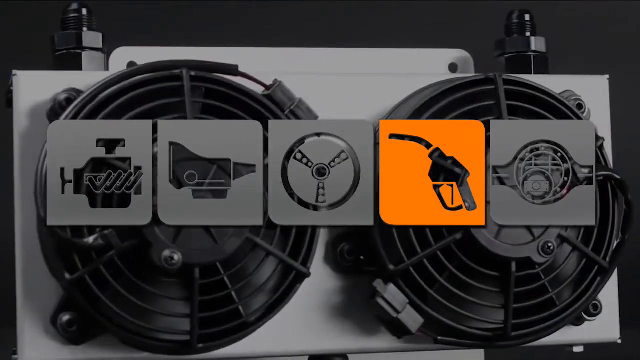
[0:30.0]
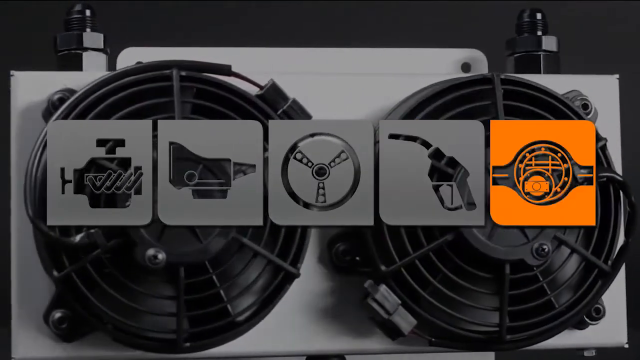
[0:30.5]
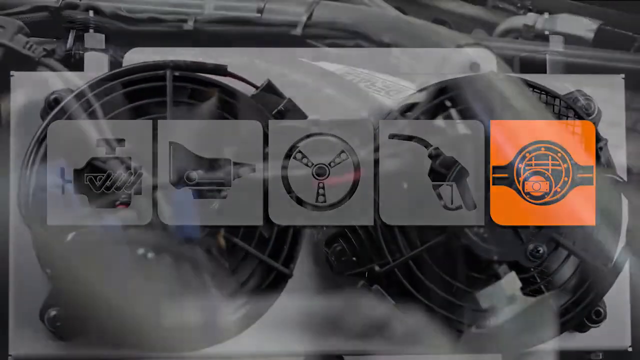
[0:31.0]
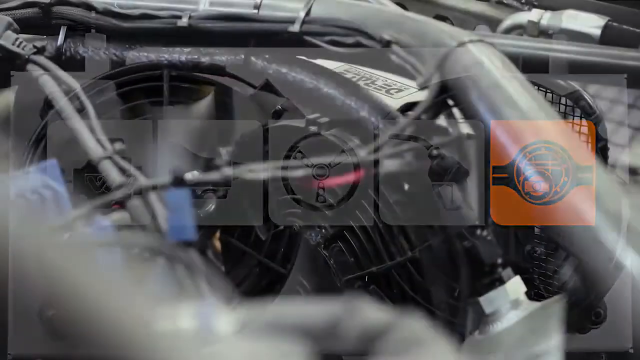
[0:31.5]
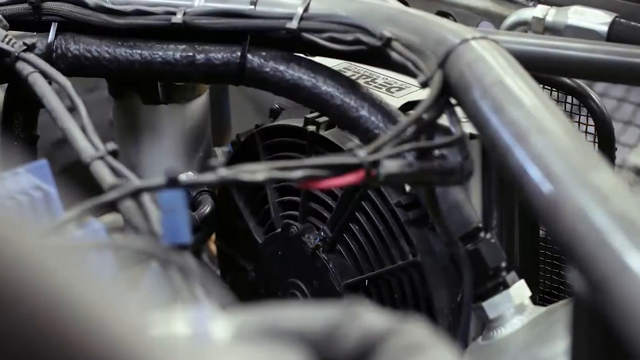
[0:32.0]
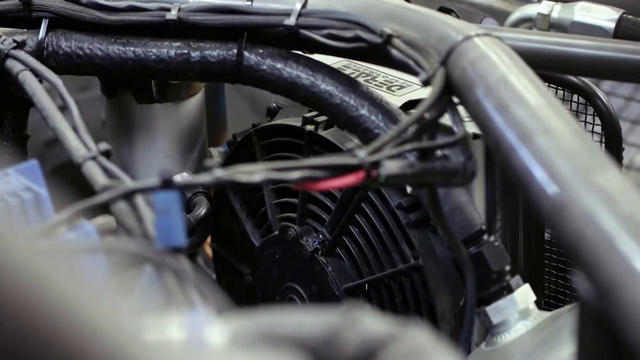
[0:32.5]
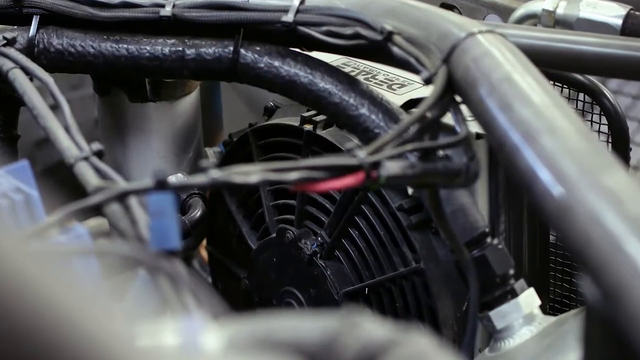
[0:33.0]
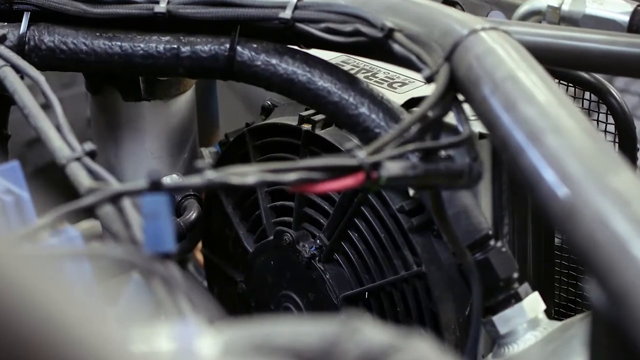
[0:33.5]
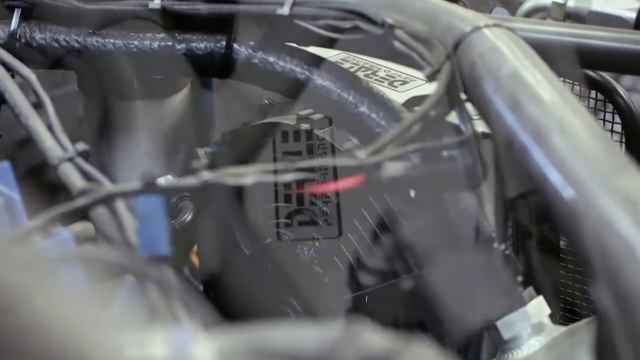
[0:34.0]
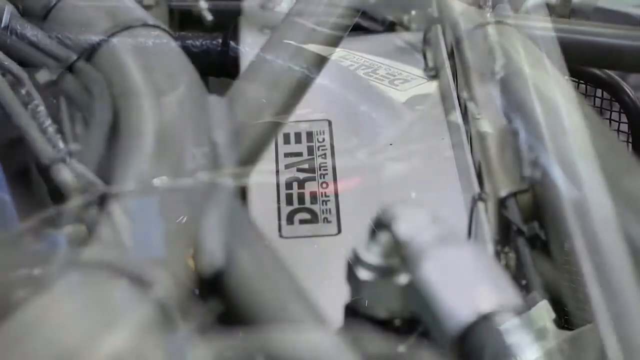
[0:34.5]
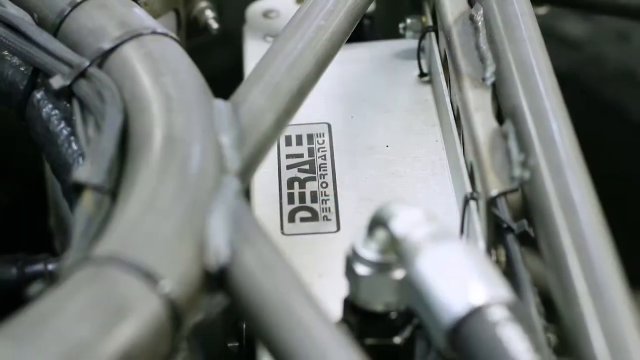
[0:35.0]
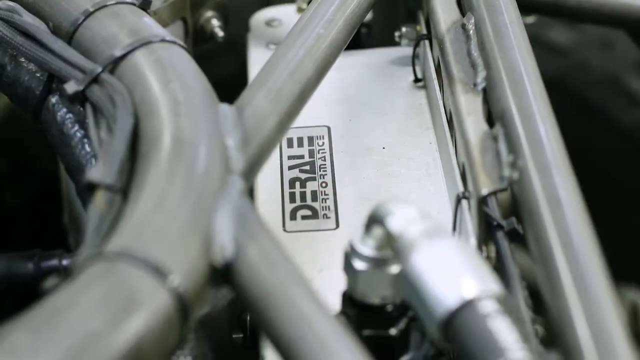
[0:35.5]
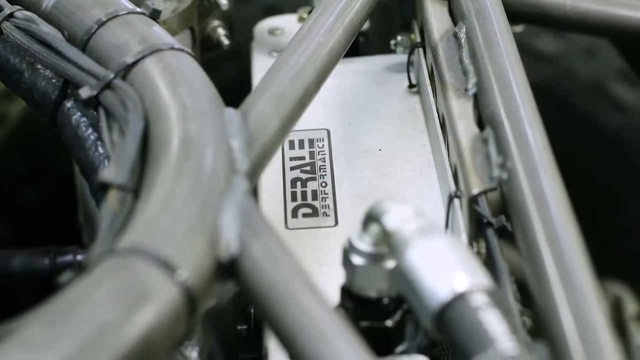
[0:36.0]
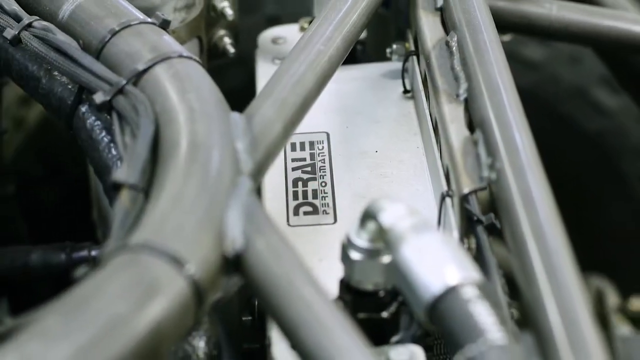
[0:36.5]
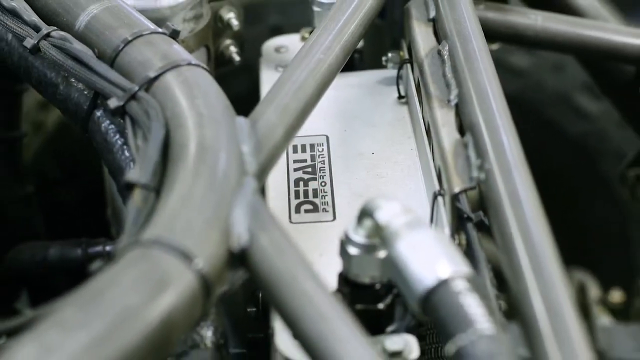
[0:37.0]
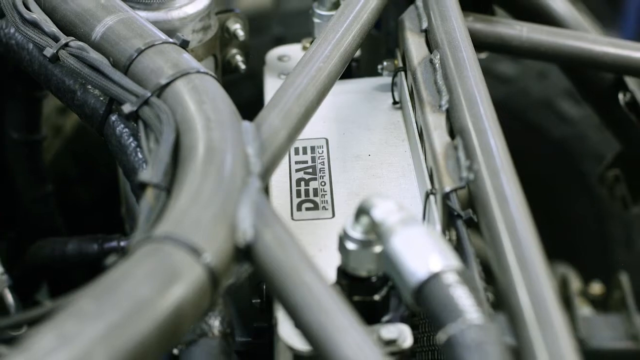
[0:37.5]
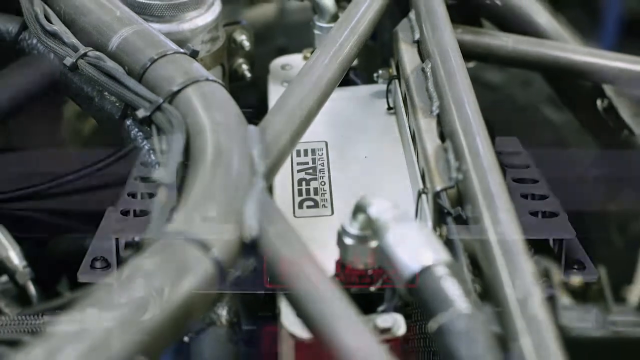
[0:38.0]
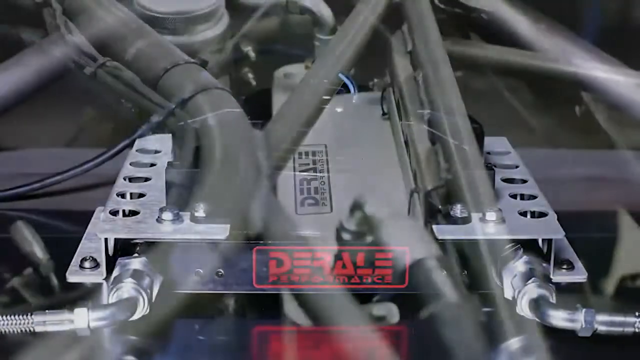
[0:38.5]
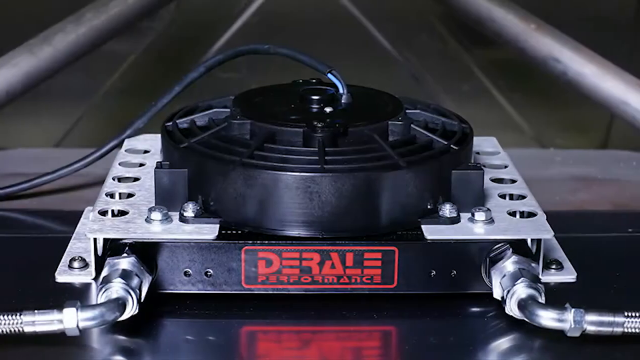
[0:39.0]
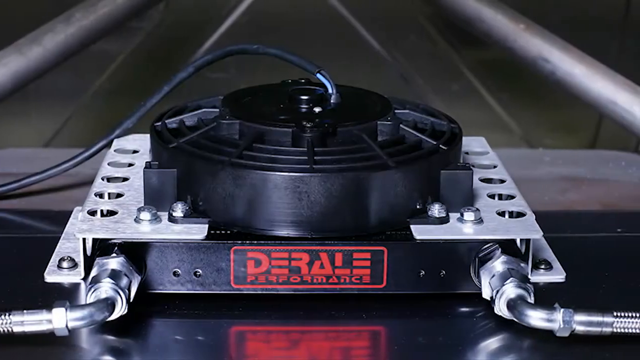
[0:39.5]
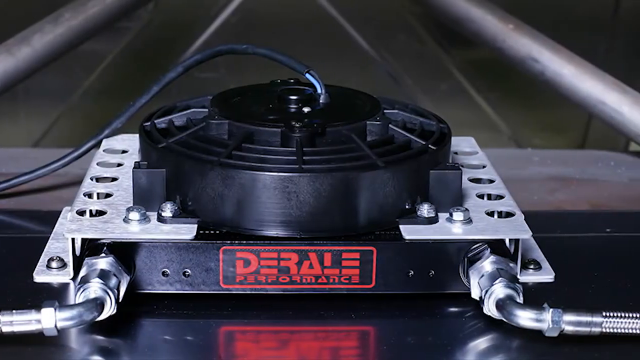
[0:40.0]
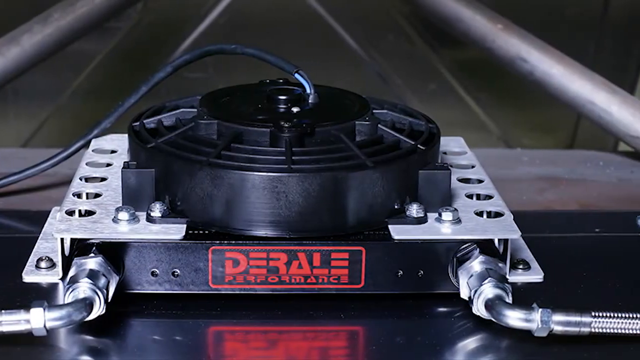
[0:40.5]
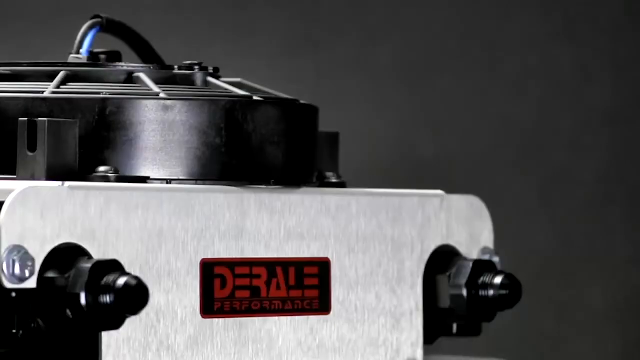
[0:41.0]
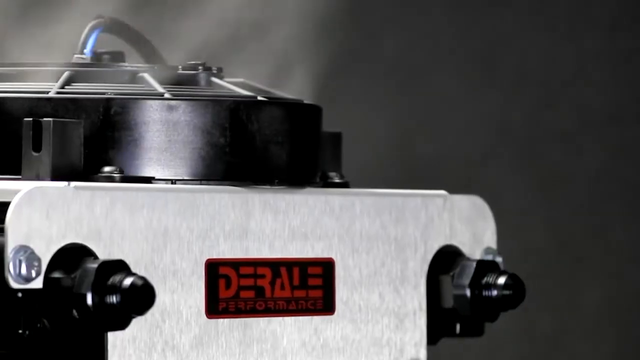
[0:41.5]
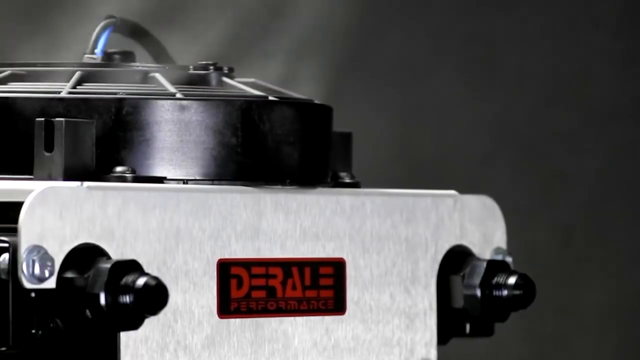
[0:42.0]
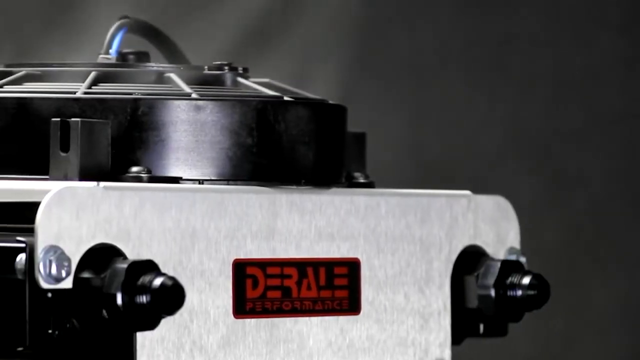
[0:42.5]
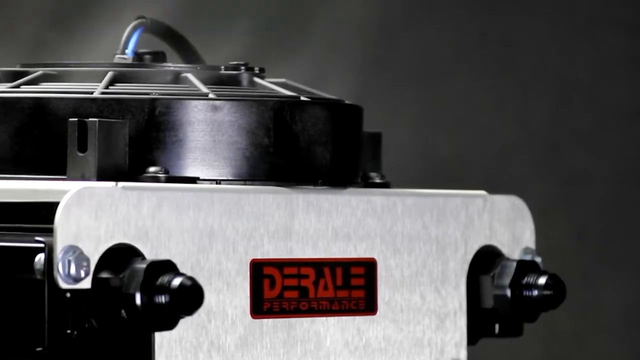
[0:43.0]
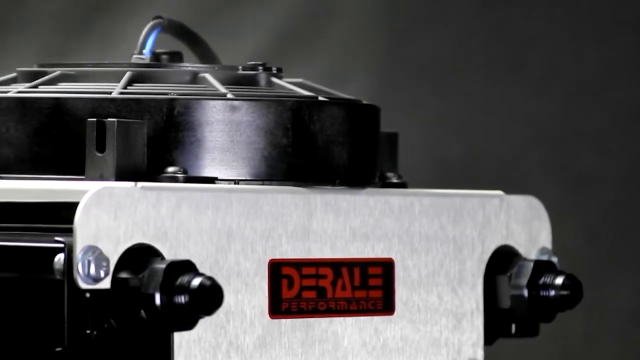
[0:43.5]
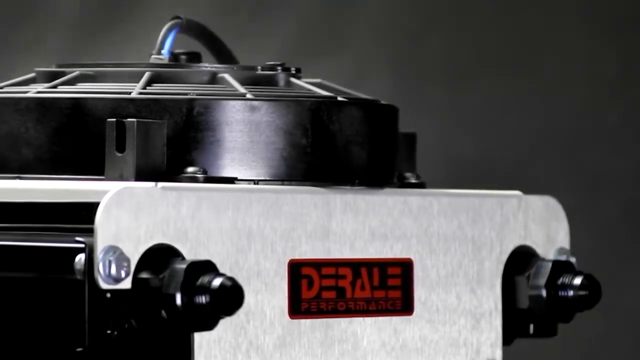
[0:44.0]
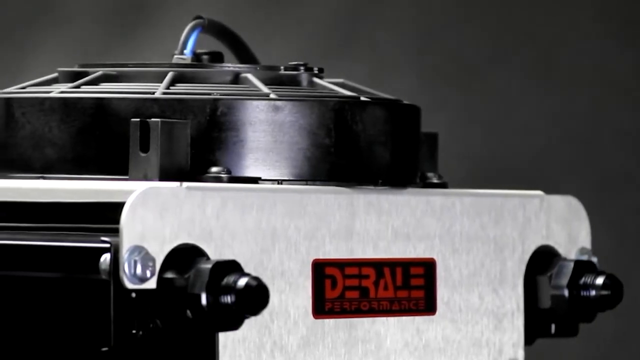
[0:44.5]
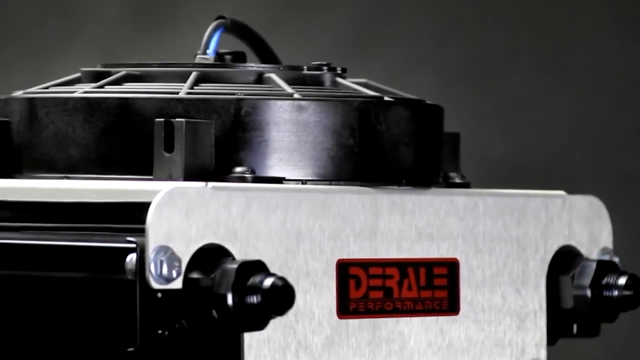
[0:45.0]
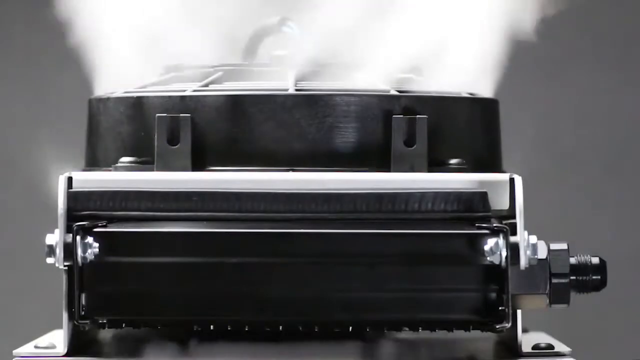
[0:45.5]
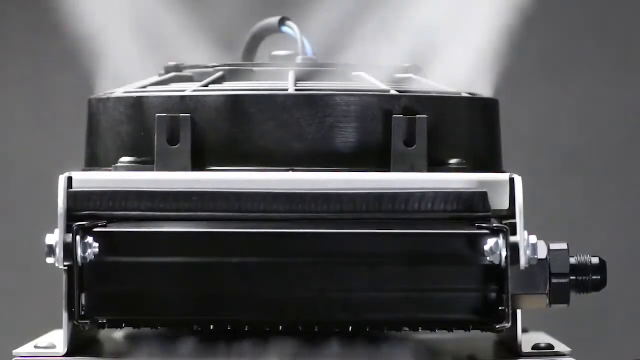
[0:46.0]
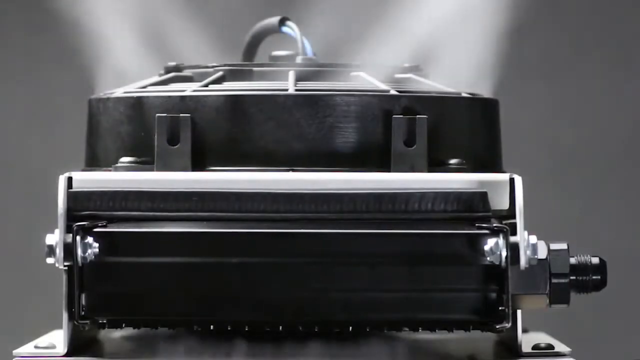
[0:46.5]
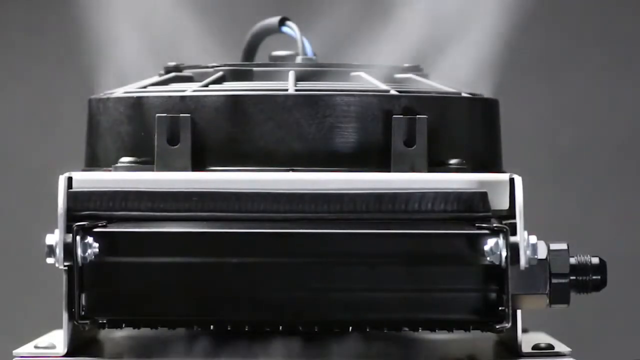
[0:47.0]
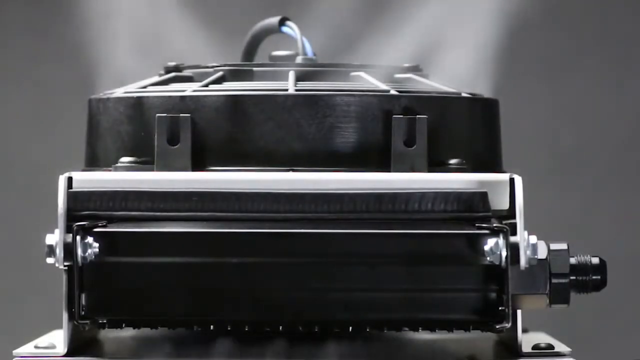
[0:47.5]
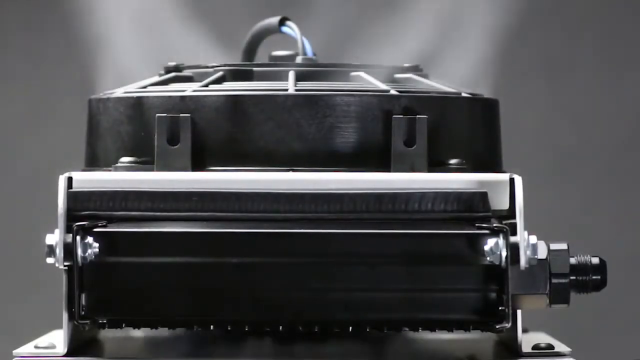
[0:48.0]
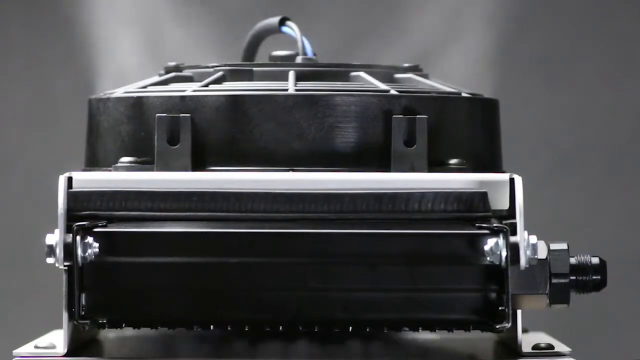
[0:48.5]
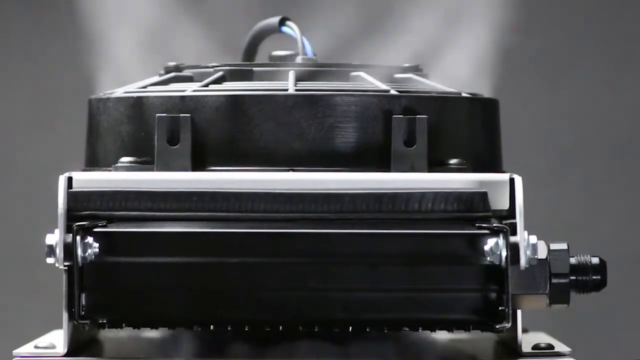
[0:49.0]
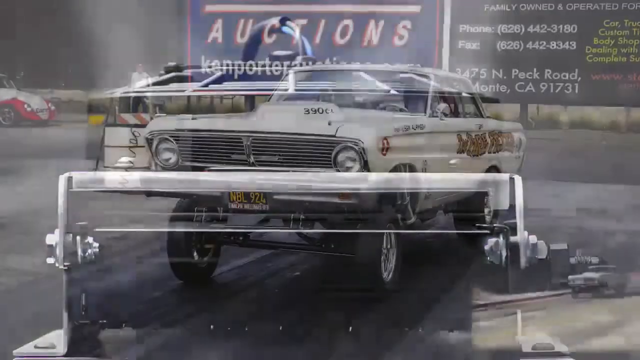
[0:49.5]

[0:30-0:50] Many symbols that seem connected to cars appear: a motor symbol, an engine symbol, a steering wheel symbol, a gas symbol and two unidentified symbols. The interior of the product, D-Rail Performance, is shown; it seems to be a cooler of some sort. It is installed inside an engine, and steam goes out of the machine. It seems to take something from the car to the outside of the car. Many pictures show the system and how it operates, though what it does is not clear. At the end a white car appears, seemingly connected to some kind of engine; possibly the product cools down the engine.